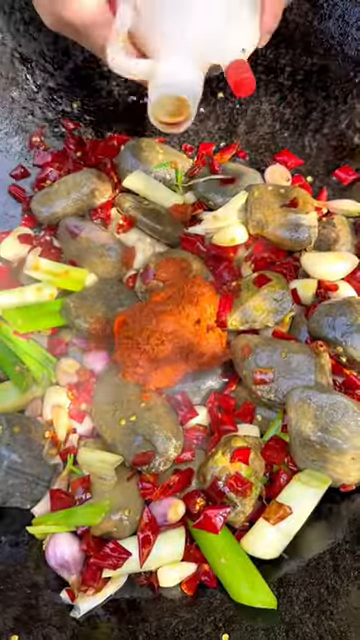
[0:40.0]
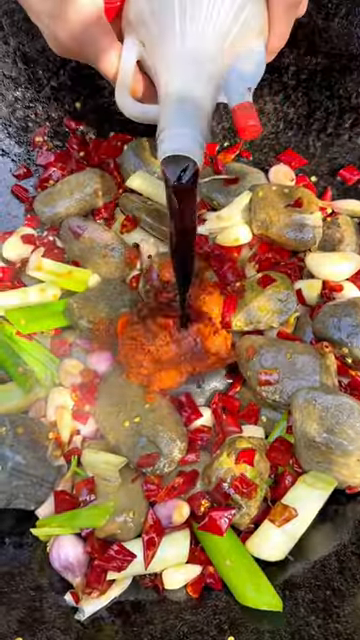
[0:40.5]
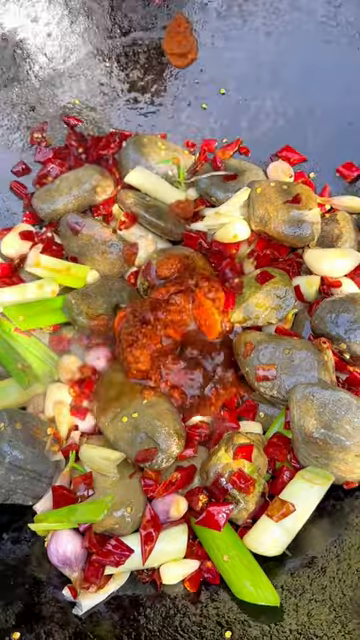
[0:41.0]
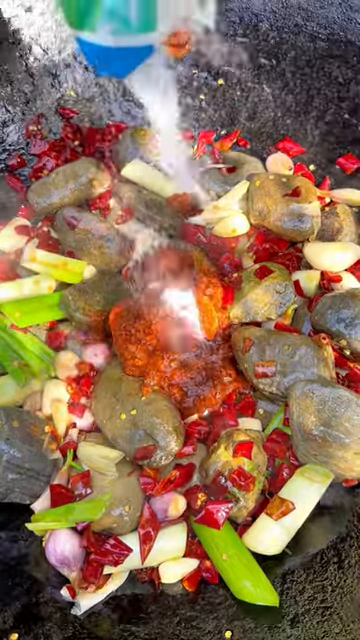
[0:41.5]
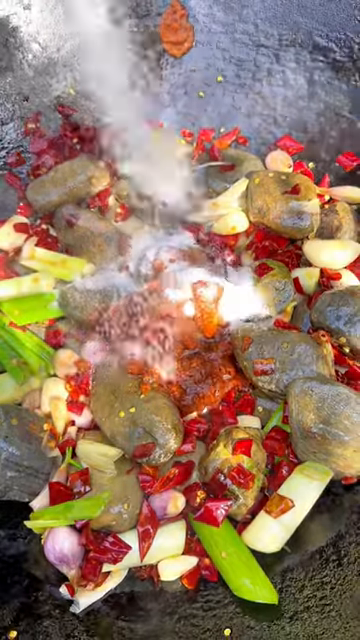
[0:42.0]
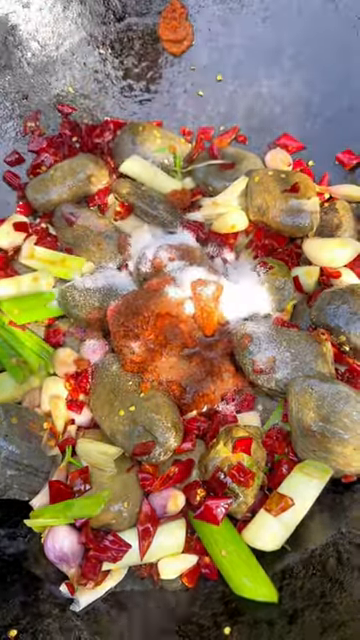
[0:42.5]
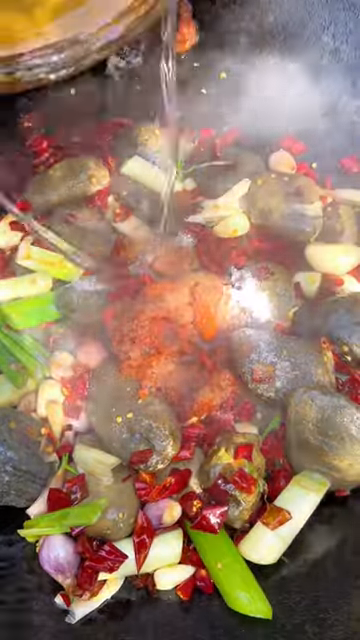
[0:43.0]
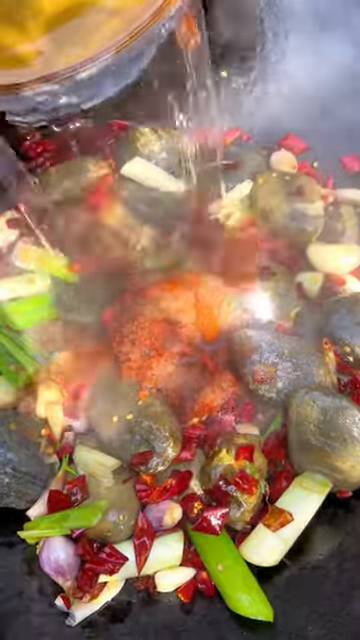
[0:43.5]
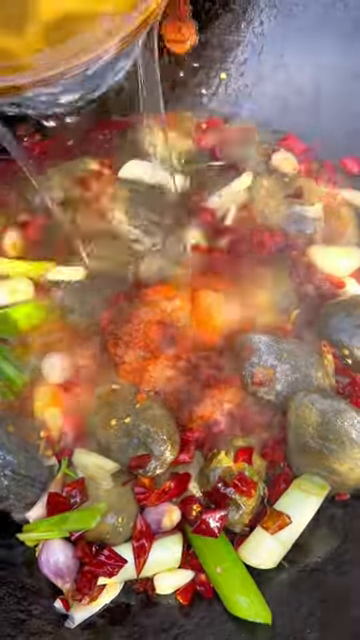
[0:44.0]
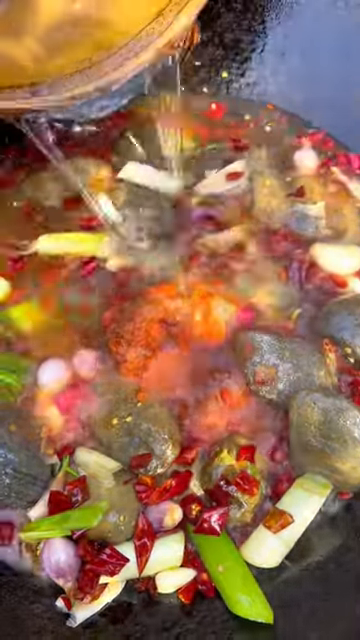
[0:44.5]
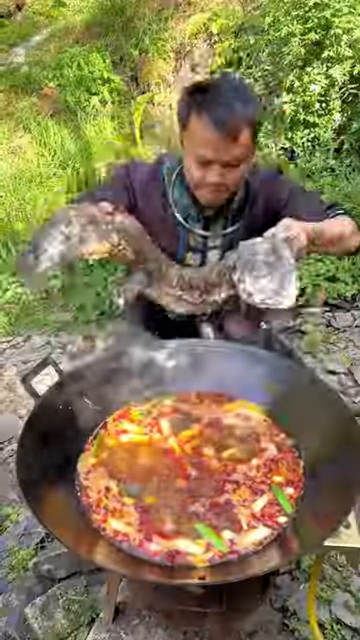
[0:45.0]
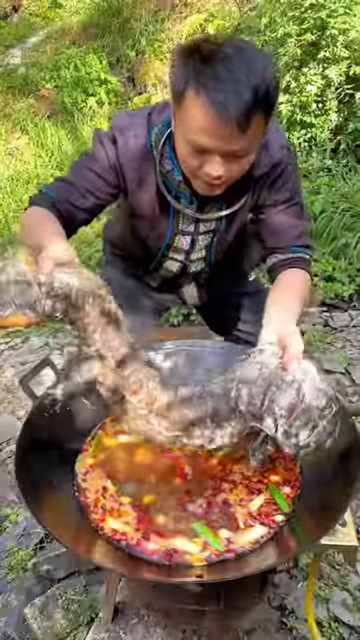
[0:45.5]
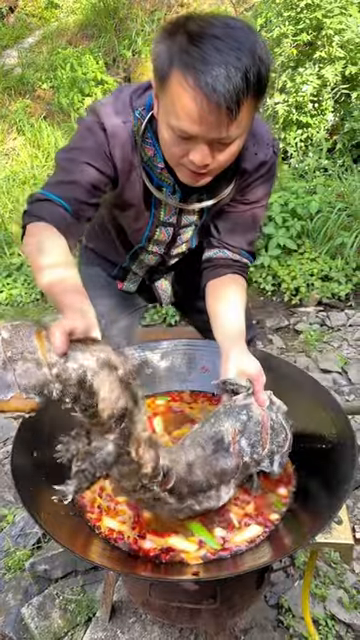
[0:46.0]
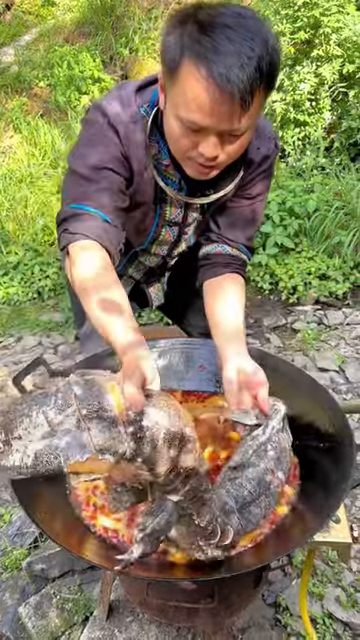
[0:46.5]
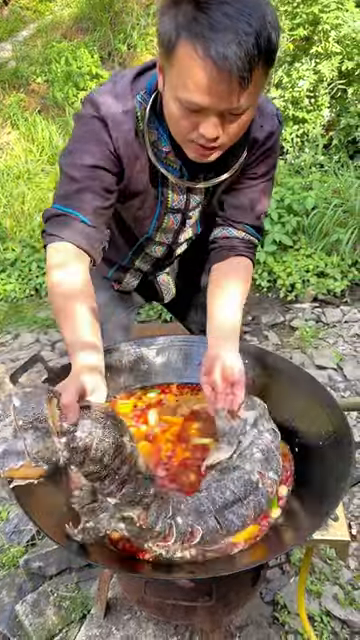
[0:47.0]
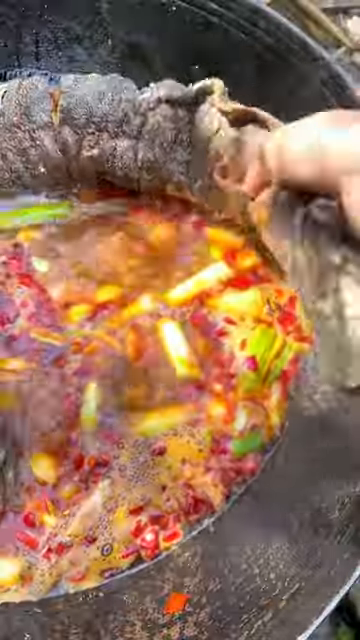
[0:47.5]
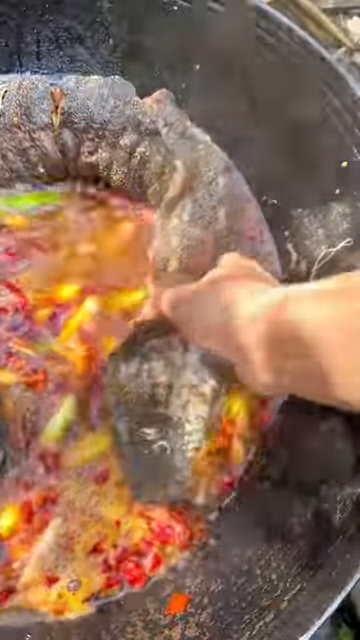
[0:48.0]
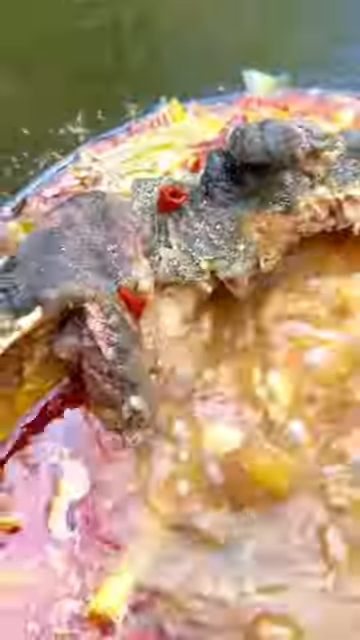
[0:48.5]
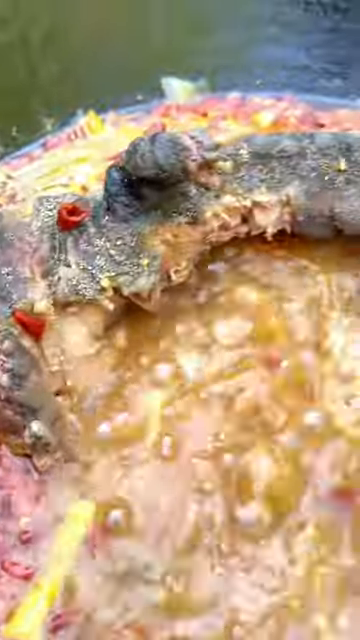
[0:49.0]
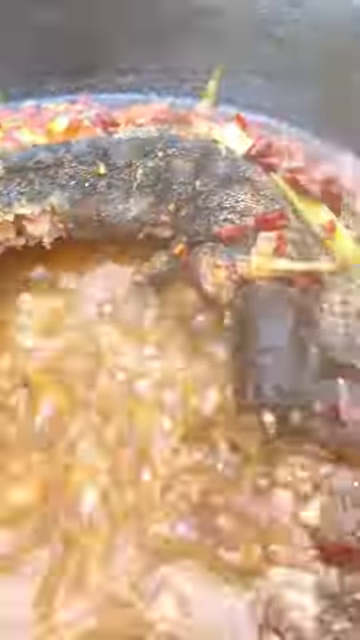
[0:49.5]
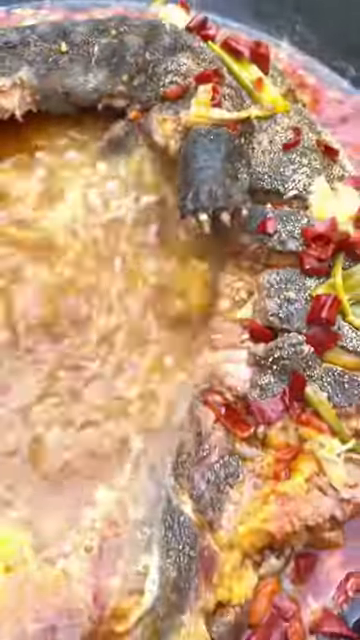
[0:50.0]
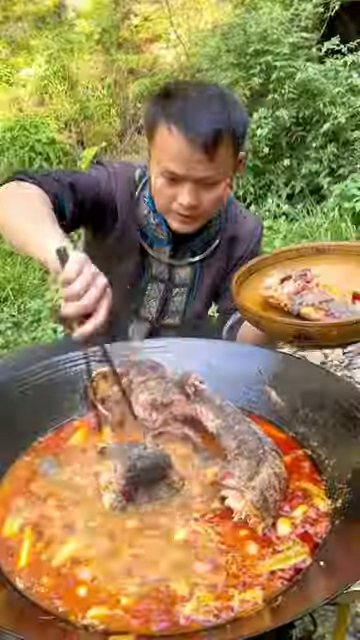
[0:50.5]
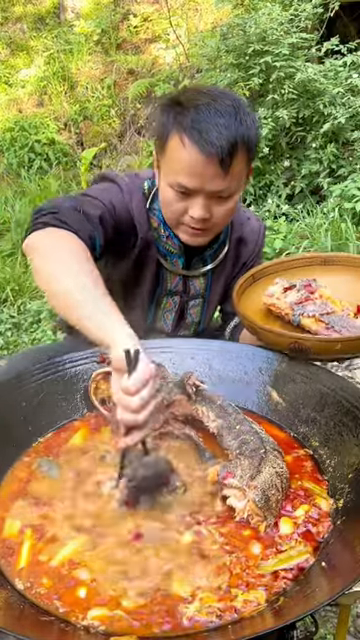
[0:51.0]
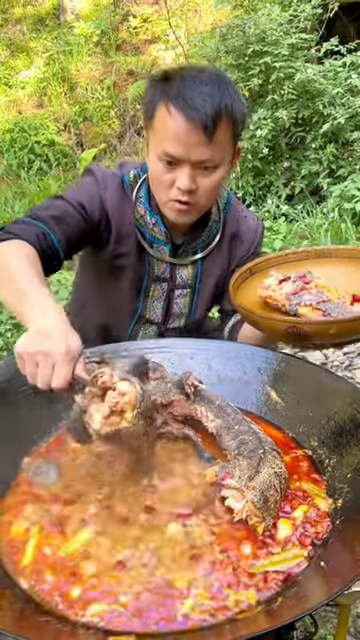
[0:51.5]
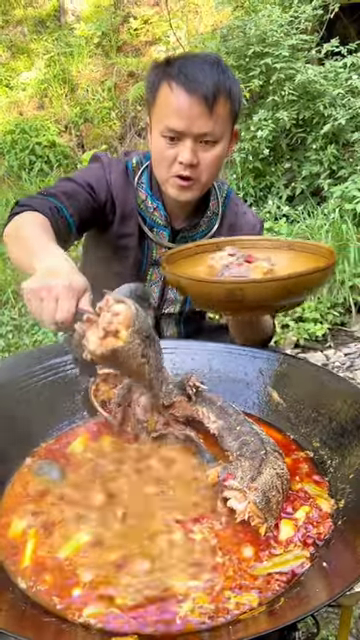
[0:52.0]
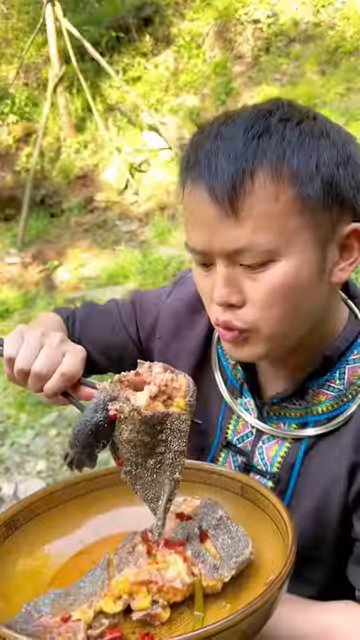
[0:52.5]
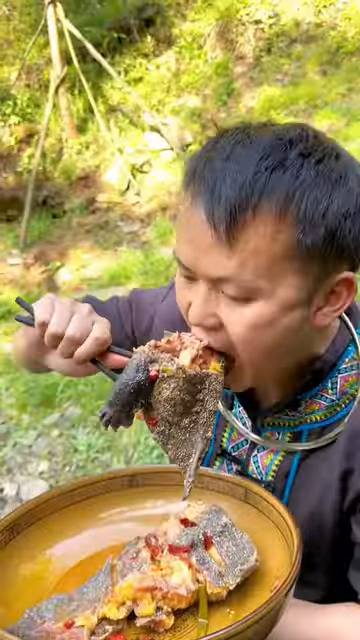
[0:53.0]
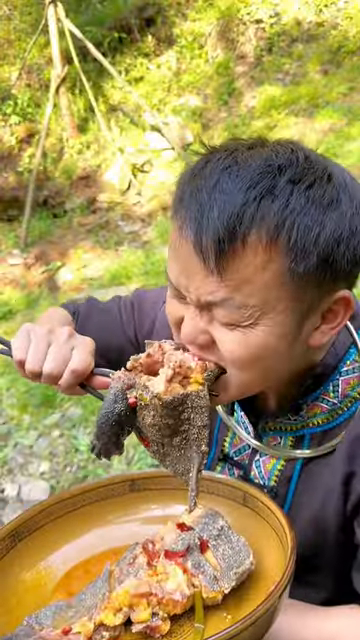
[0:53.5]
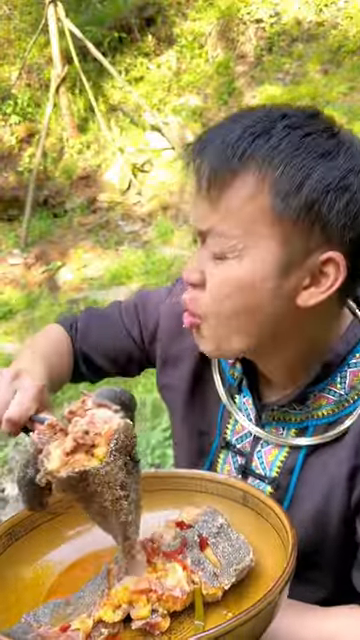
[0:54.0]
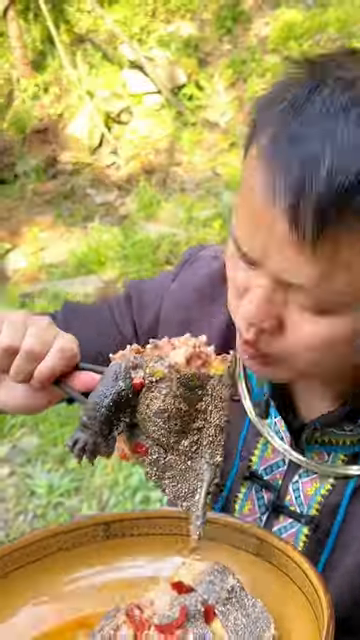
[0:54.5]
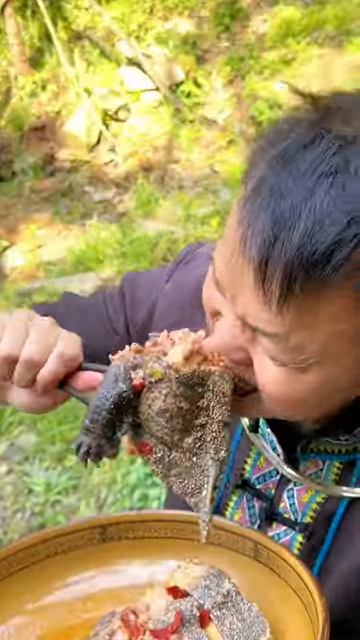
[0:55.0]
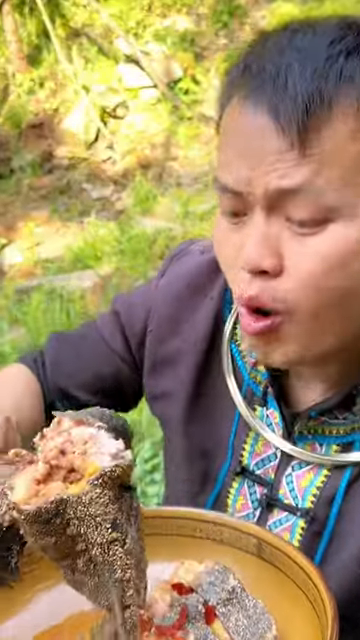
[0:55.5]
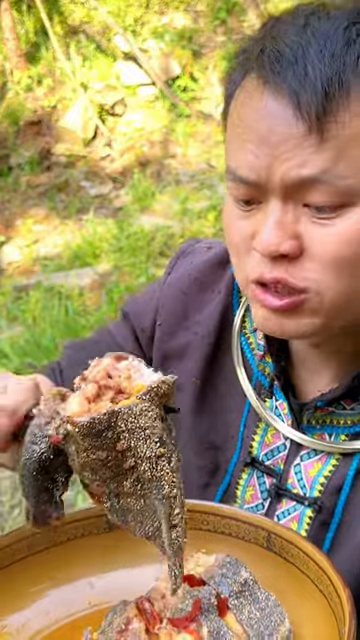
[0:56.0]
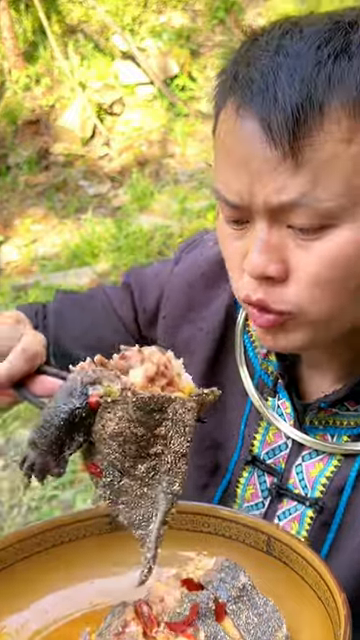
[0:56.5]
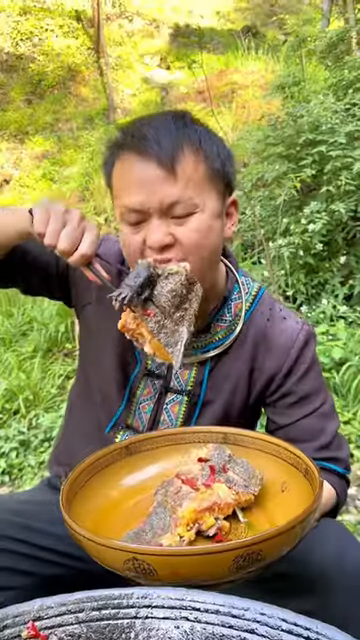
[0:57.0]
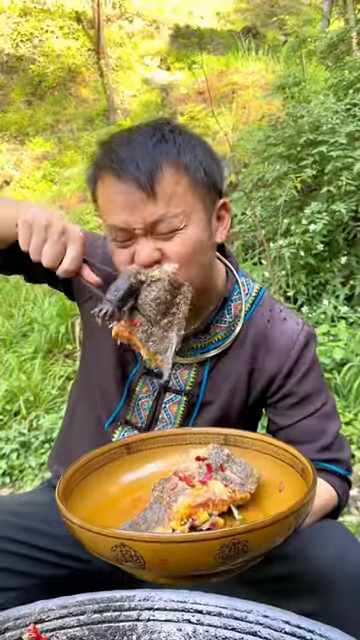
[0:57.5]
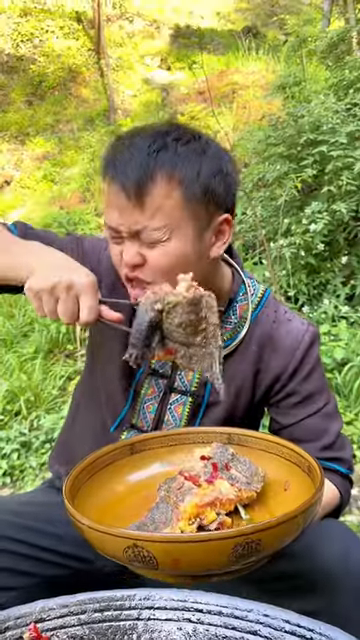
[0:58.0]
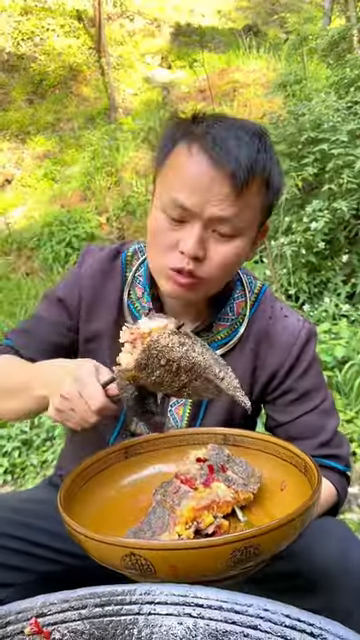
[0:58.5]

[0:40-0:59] A man cooks some rocks with chopped red chili peppers, shallots and green leeks in a large wok outdoors. He adds an orange chili paste, fills the wok with some water, and places the large salamander stuffed with the vegetables he prepared earlier into the wok. Soy sauce and a white powder are also added to the mixture. He puts the lid on the wok, and once it is cooked he opens it, puts the salamander on a serving platter and begins eating the head of the salamander to taste it, taking large bites of the meaty head. All of this takes place outdoors in a rural green area. It looks like a traditional recipe unique to this local area and ethnic group. The man wears a traditional costume.